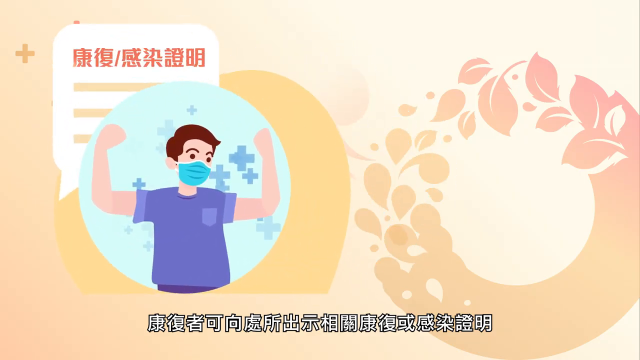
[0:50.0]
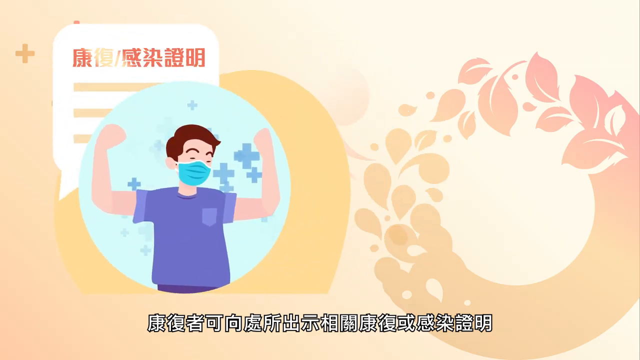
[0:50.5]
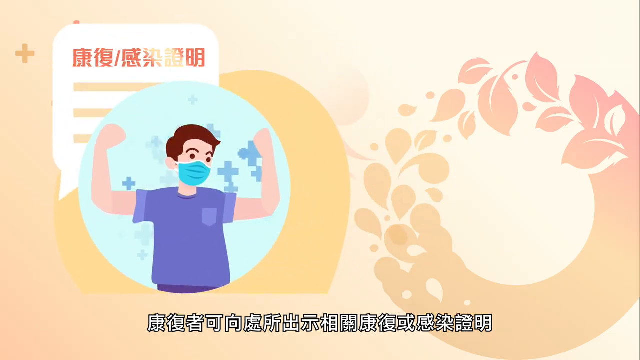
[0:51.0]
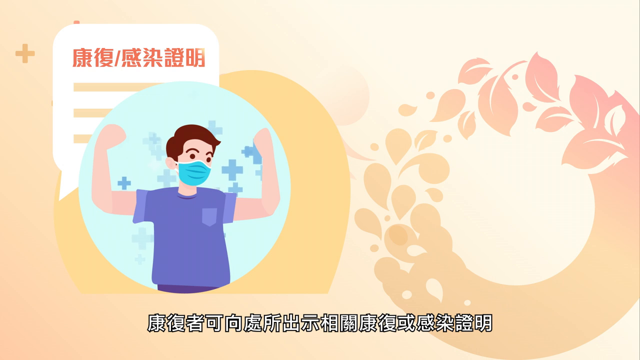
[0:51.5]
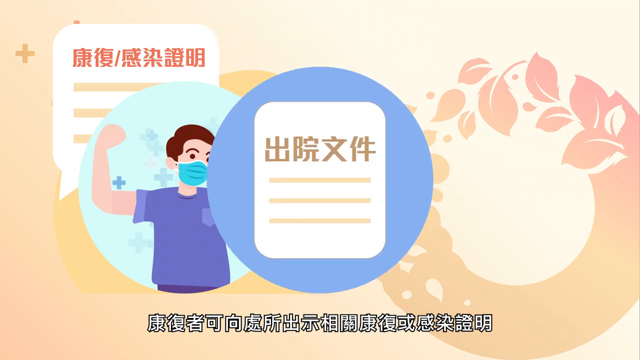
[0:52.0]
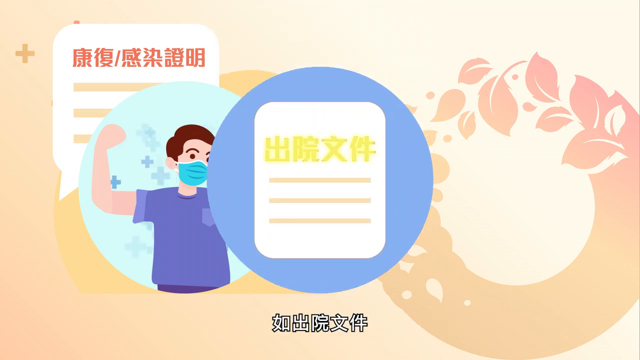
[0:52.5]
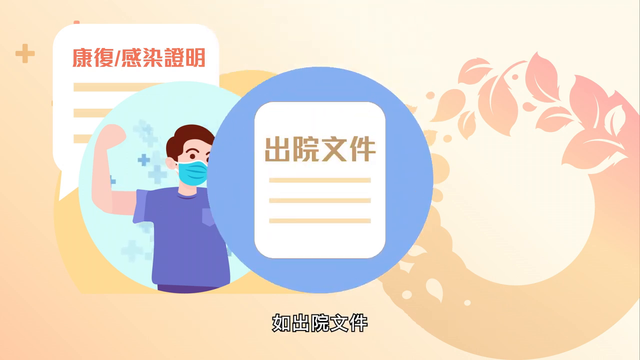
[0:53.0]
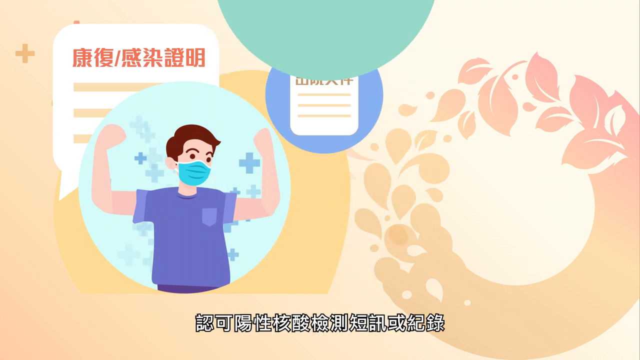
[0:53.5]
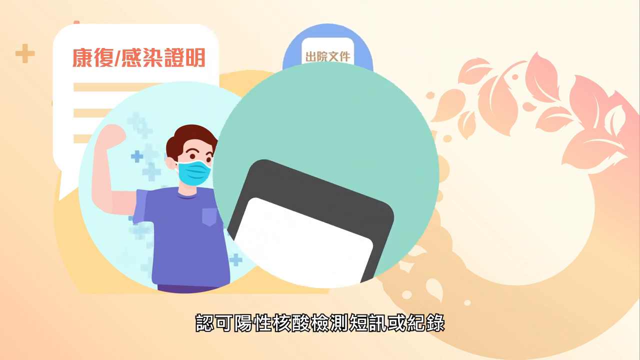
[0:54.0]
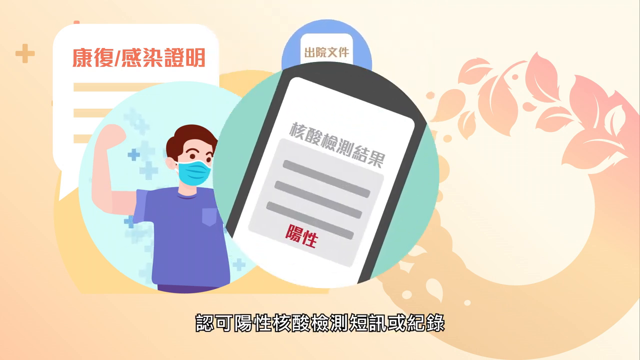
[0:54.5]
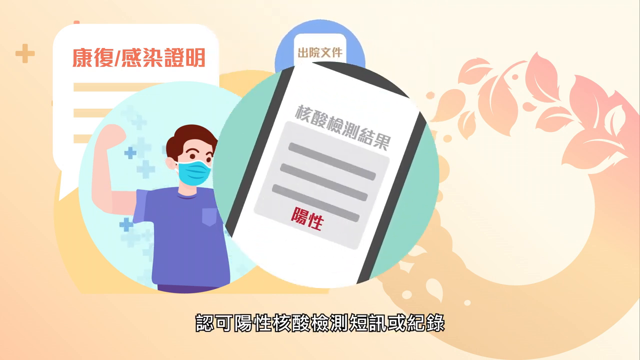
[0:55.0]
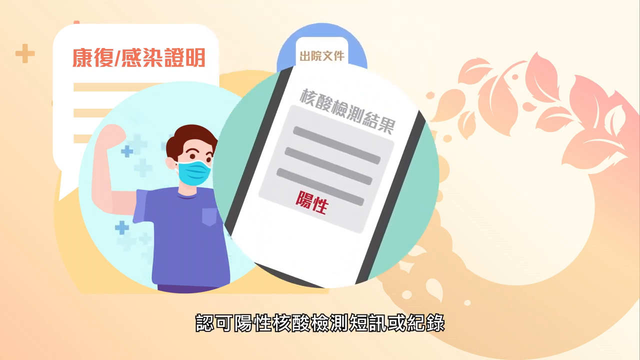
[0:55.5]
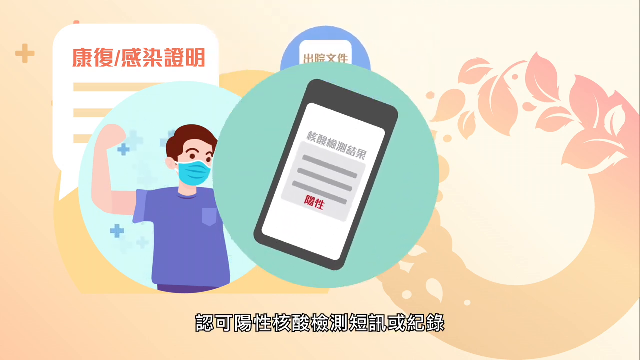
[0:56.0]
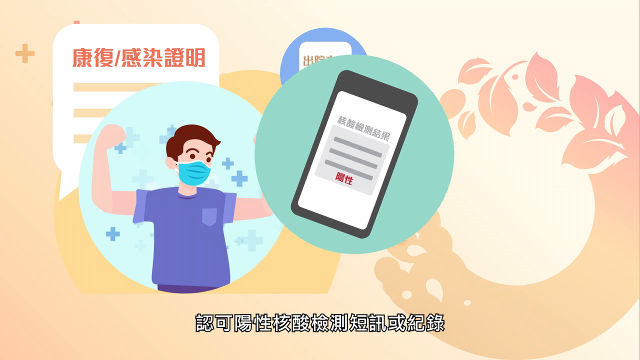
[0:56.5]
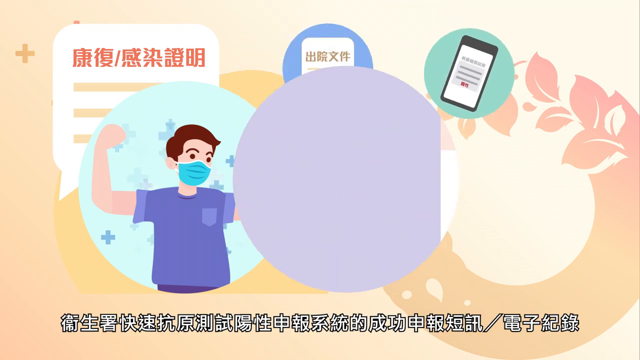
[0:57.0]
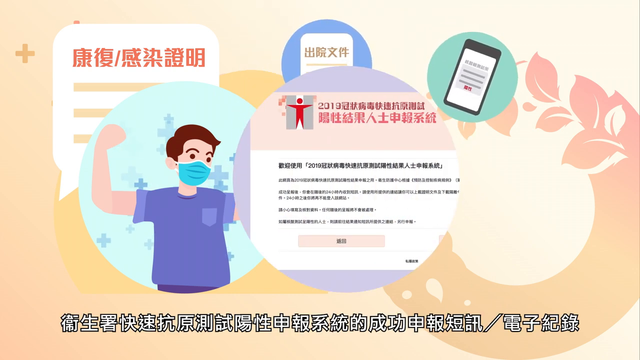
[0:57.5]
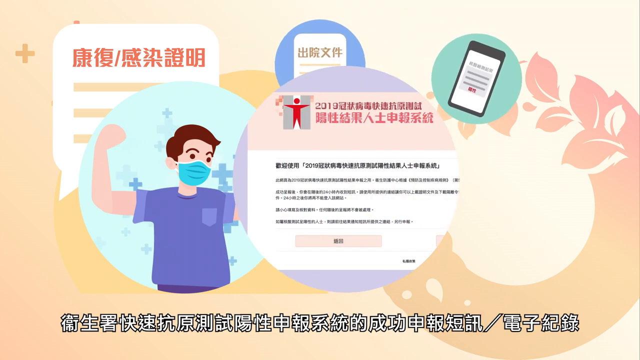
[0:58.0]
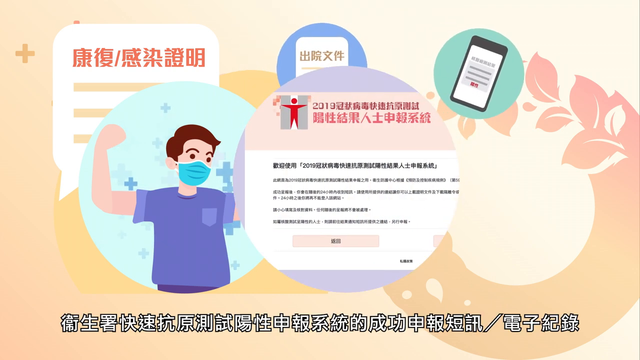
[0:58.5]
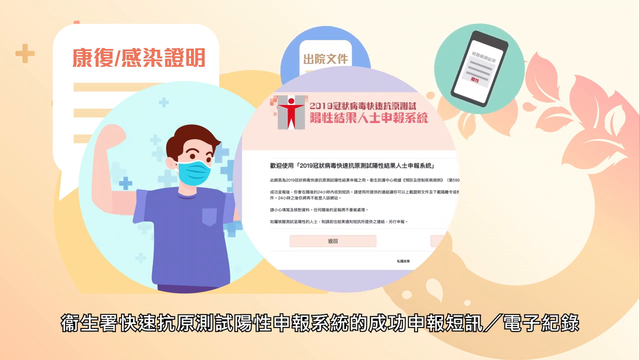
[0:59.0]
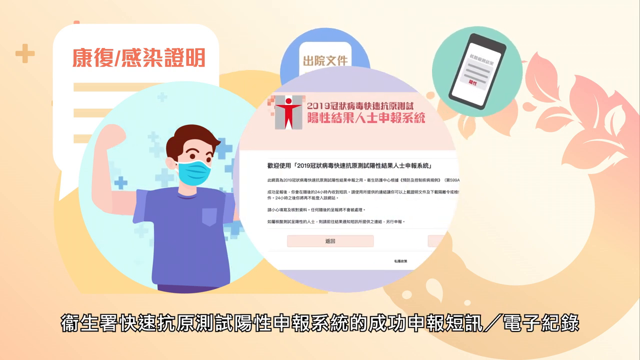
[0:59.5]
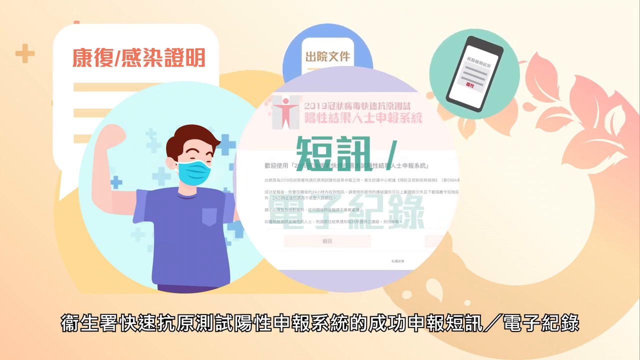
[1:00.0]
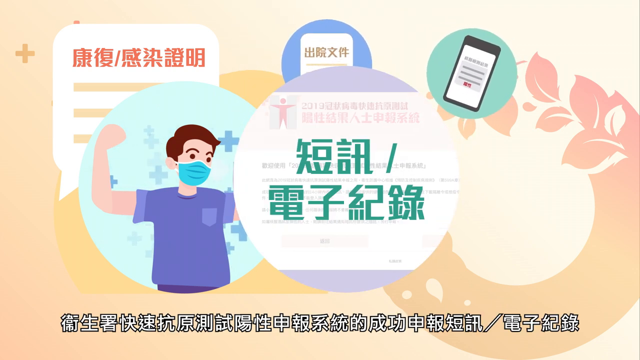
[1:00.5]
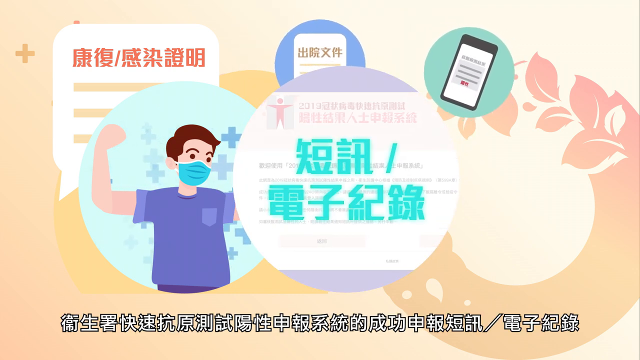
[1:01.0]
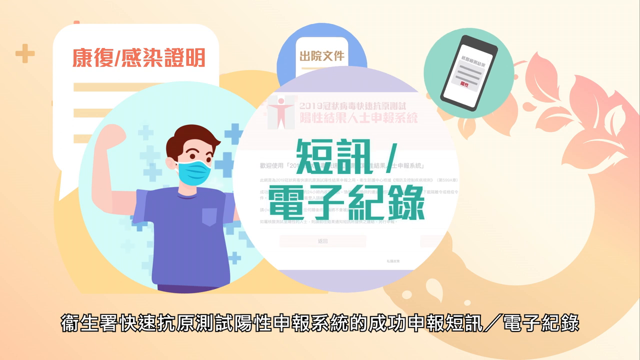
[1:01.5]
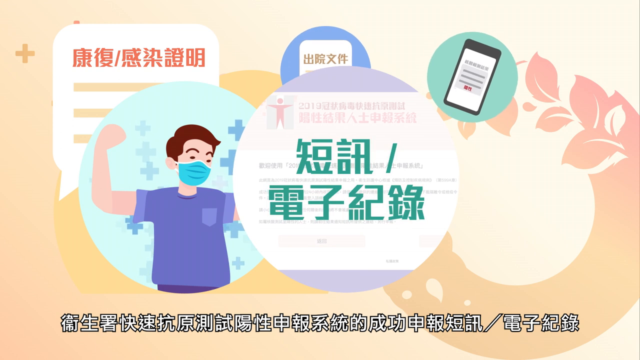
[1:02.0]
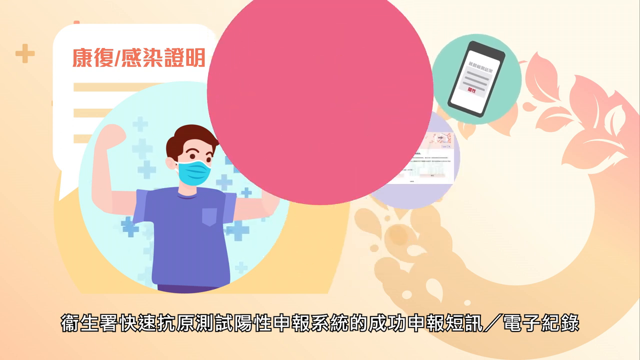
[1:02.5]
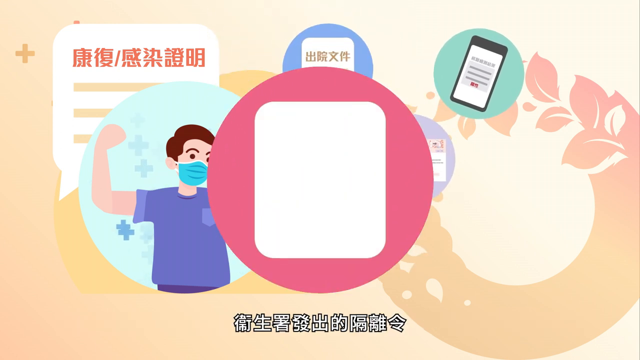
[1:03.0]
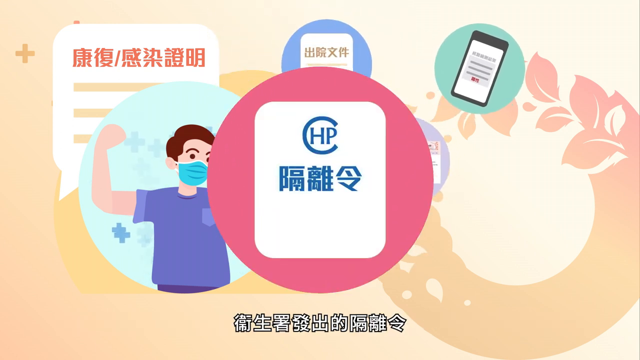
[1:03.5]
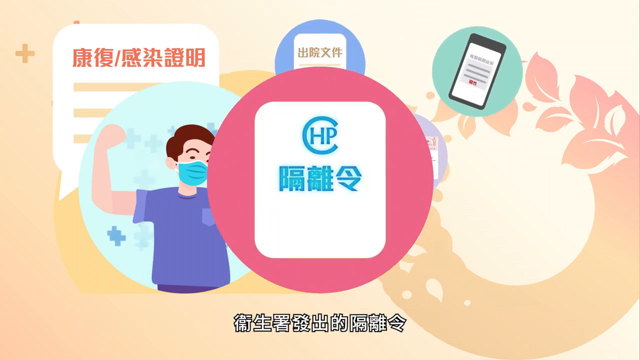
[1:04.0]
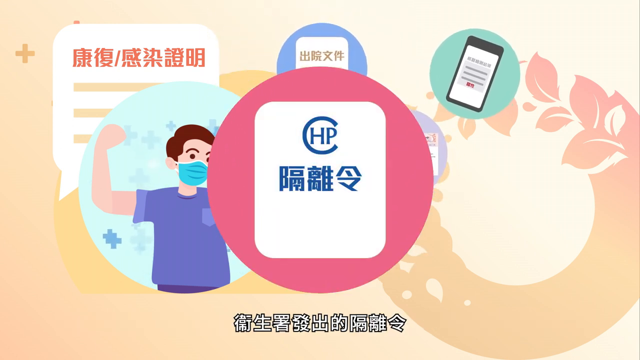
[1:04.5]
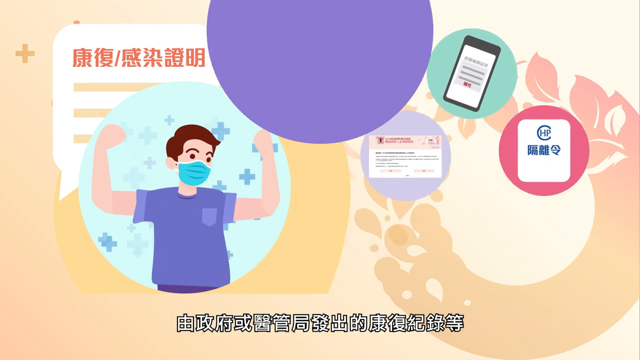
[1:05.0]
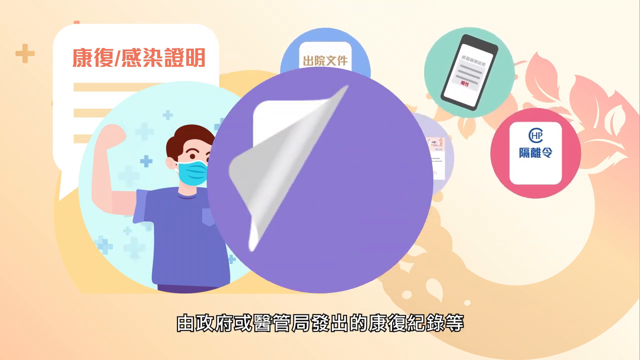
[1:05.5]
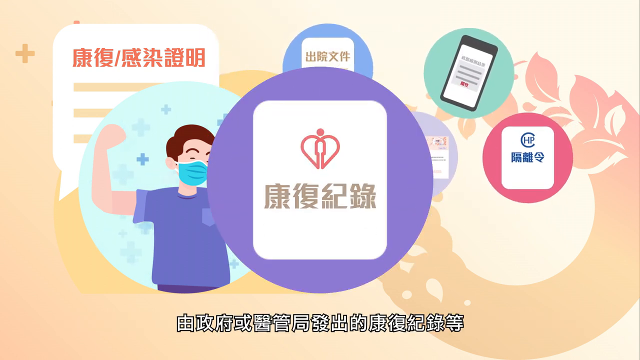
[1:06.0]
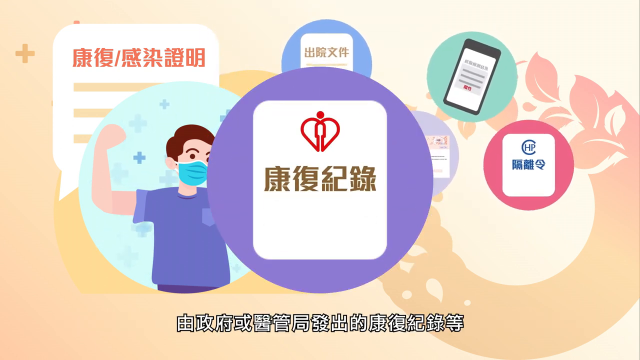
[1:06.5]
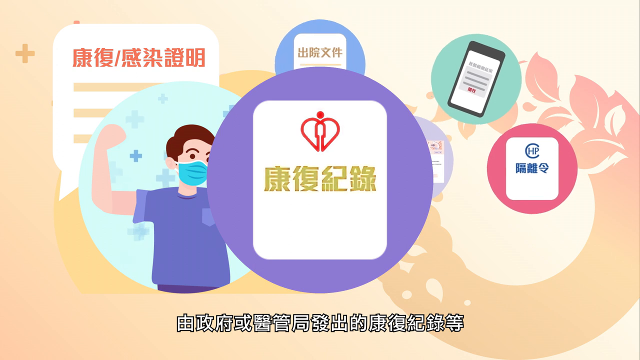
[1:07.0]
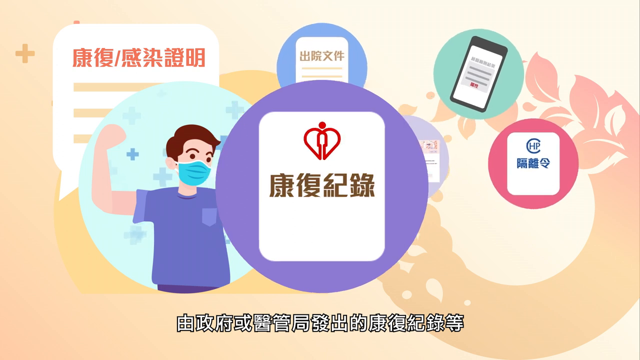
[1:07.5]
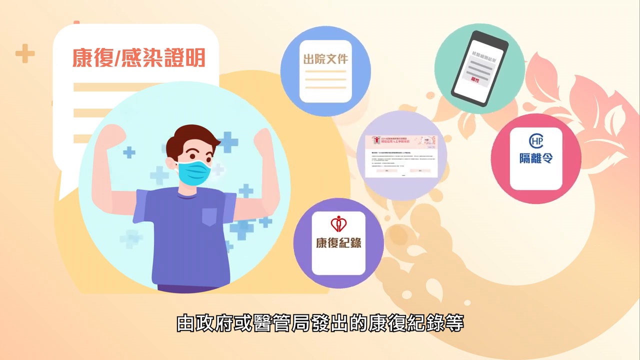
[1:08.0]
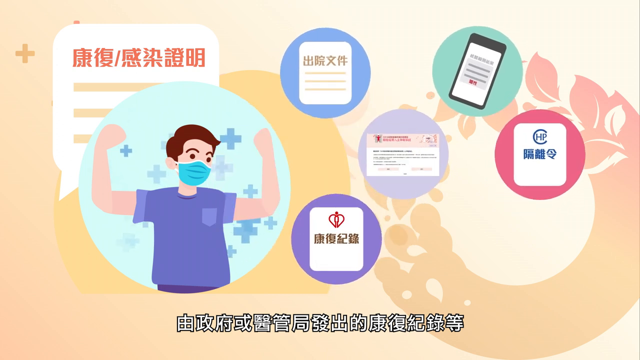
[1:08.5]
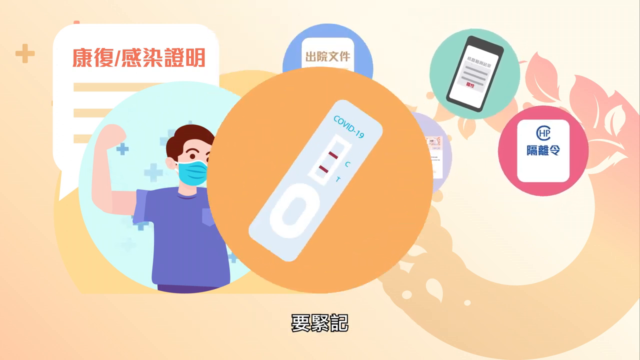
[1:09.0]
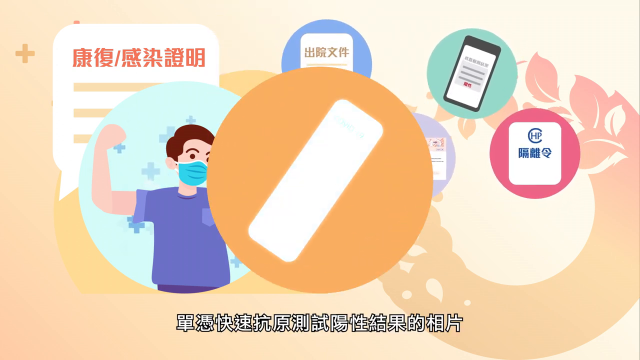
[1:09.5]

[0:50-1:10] The character remains on screen as circles come up one after another: one with text, one with something like a tablet, and one with an information card in a kind of purple-lavender color. These all go back into the screen. Next comes a pinkish one with "HP" in blue, then a purple one with a kind of heart-based logo, and then an orange one. The many graphics within circles segue into the background on the right-hand side of the screen. The character of the person is on the left; it is animated, with blinking eyes. The character is a male holding up his hands and wearing a purple shirt with a pocket.